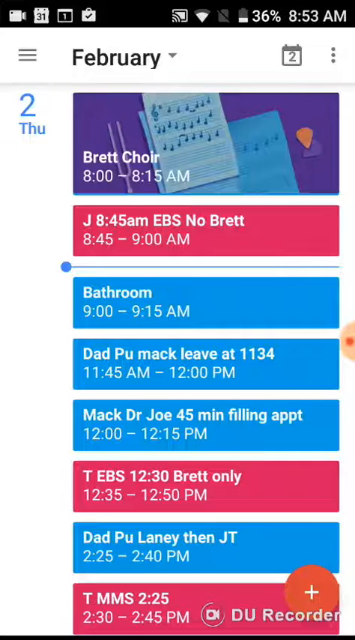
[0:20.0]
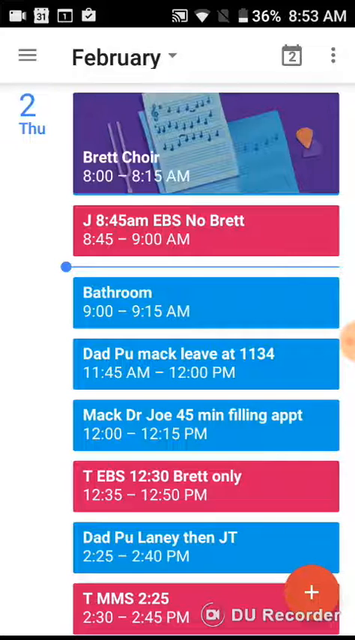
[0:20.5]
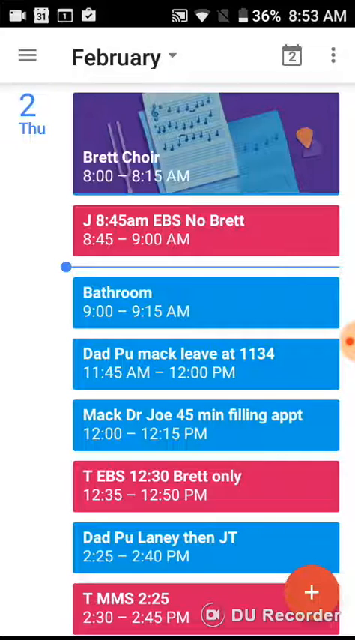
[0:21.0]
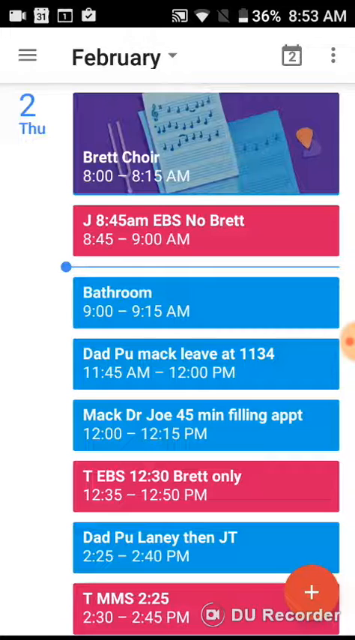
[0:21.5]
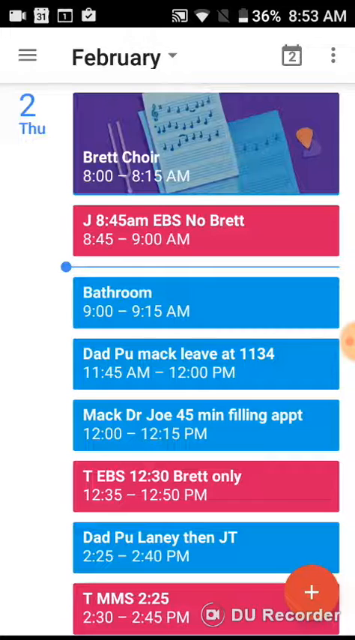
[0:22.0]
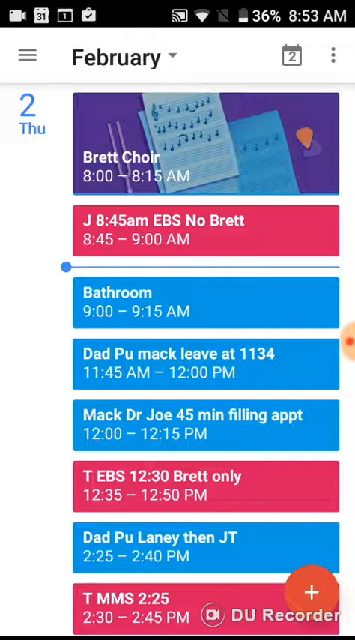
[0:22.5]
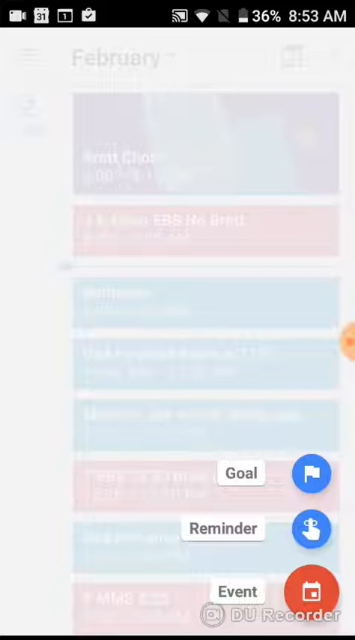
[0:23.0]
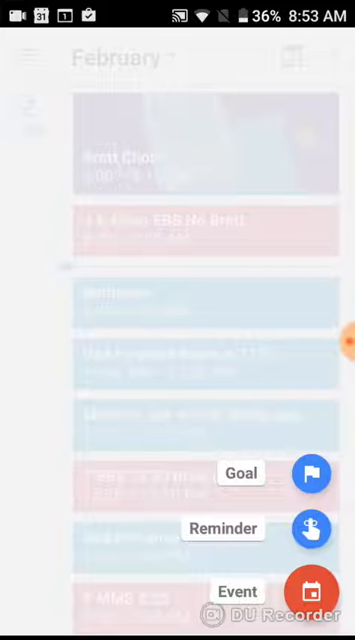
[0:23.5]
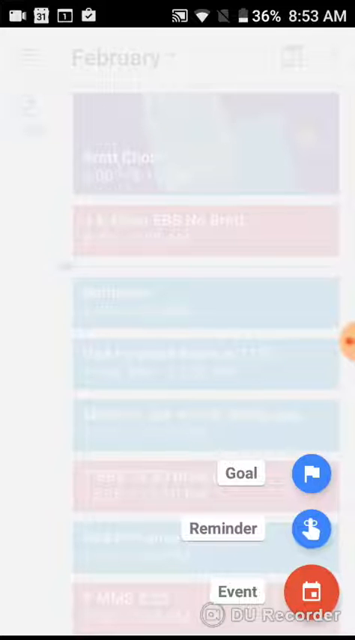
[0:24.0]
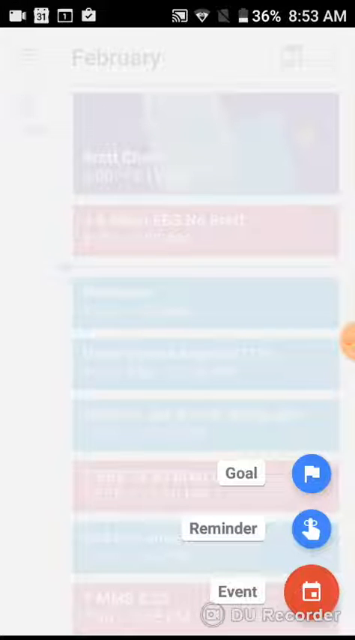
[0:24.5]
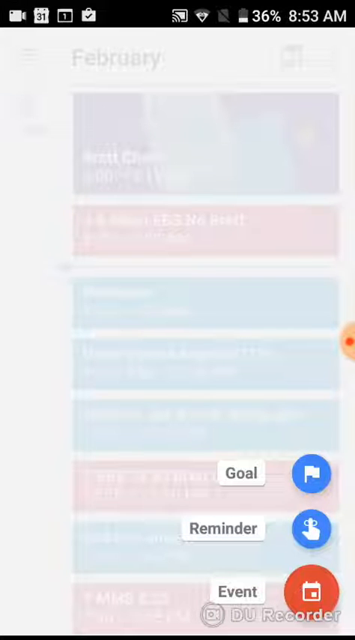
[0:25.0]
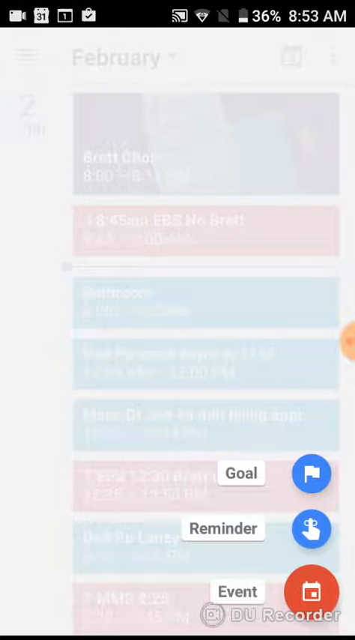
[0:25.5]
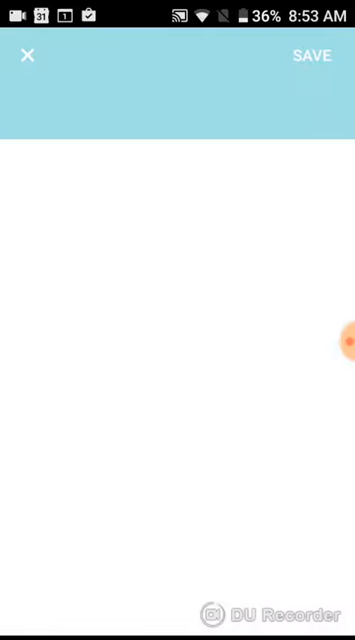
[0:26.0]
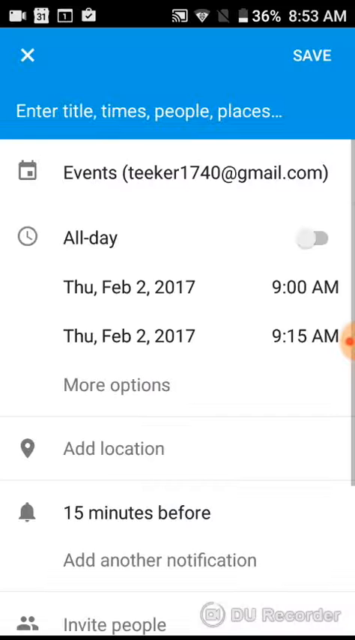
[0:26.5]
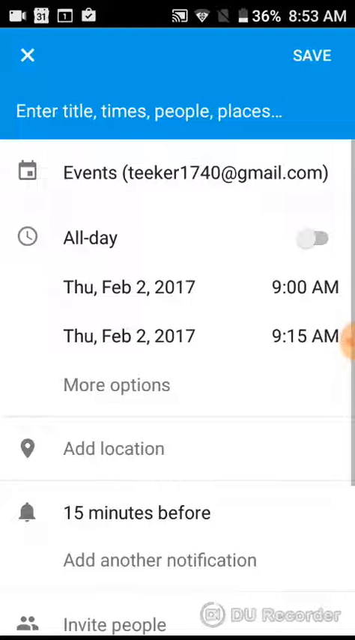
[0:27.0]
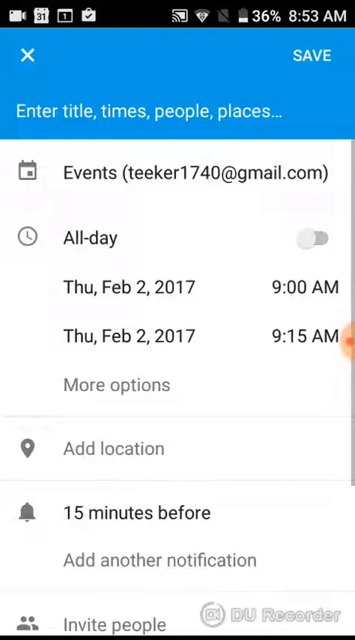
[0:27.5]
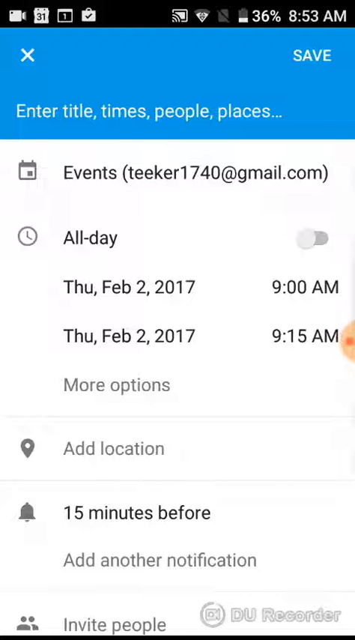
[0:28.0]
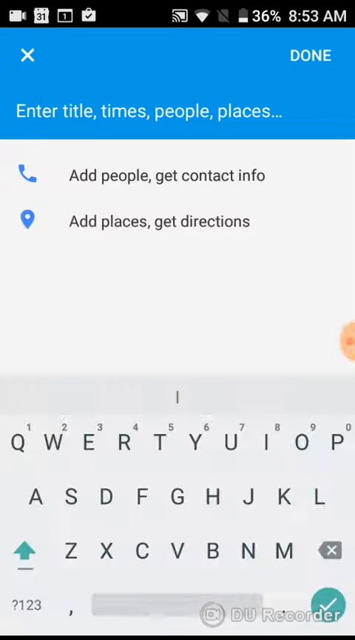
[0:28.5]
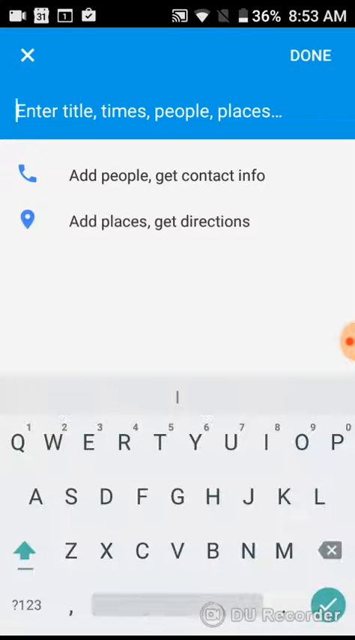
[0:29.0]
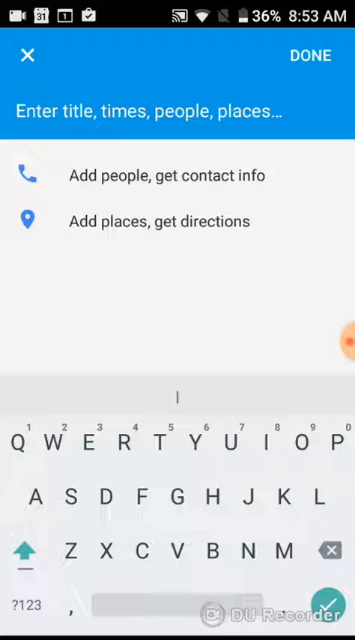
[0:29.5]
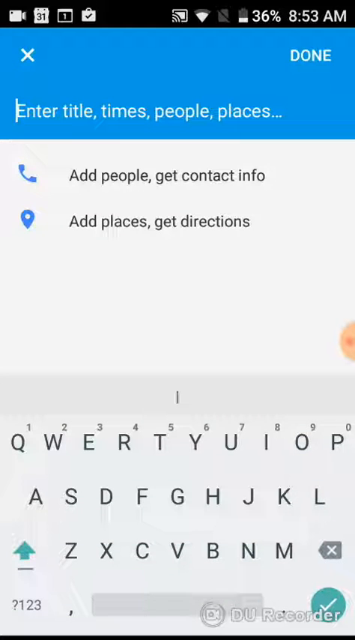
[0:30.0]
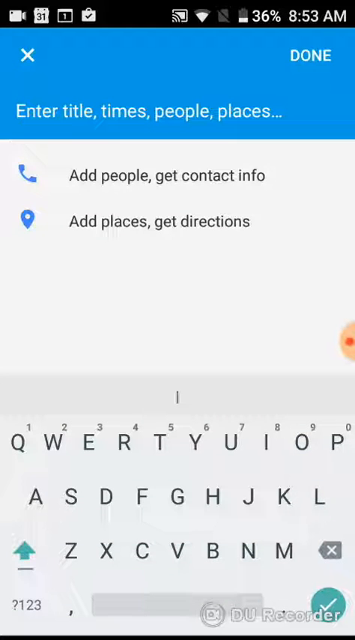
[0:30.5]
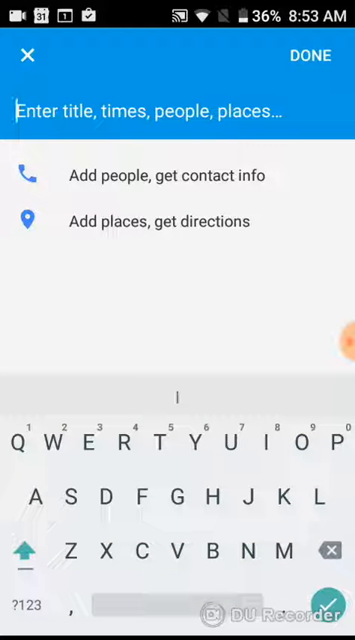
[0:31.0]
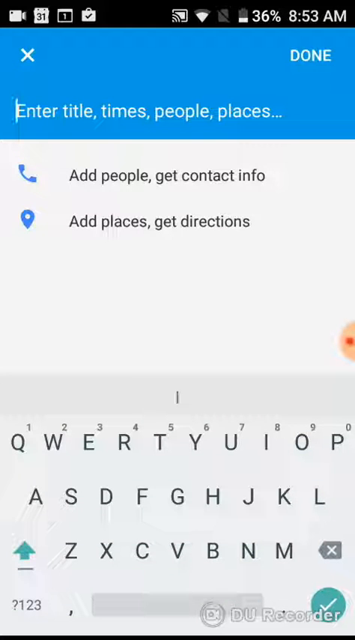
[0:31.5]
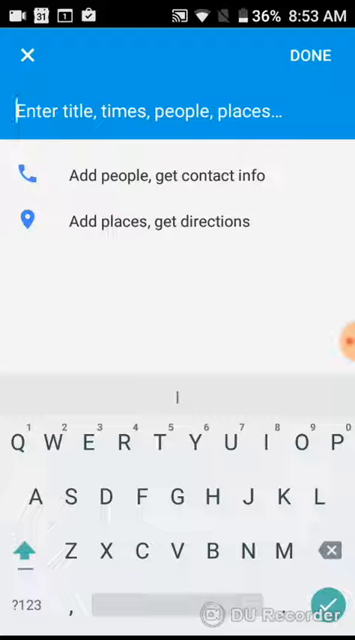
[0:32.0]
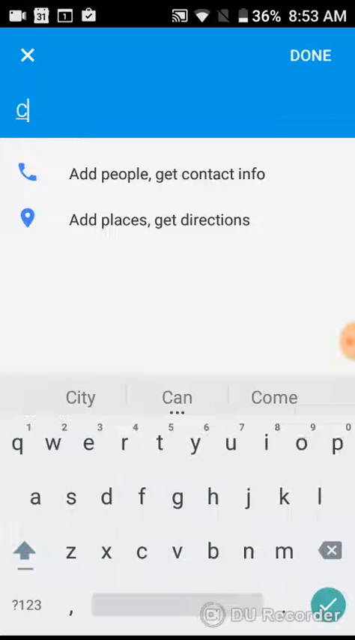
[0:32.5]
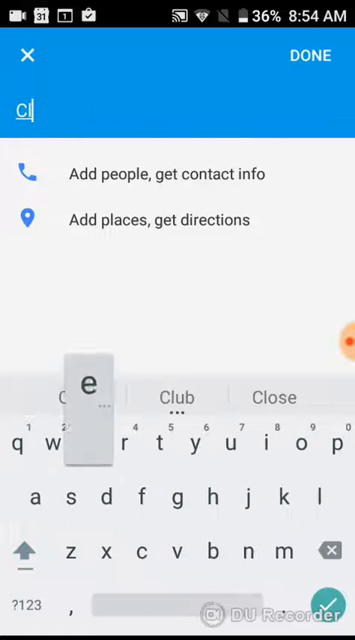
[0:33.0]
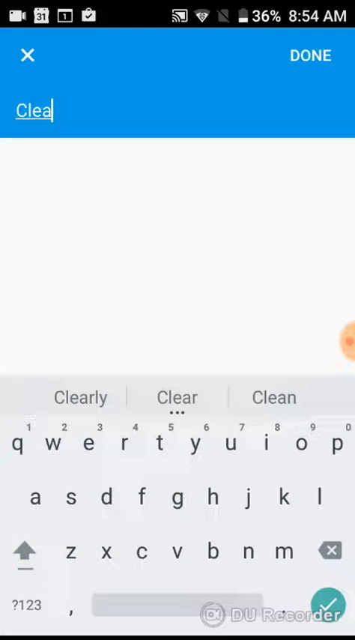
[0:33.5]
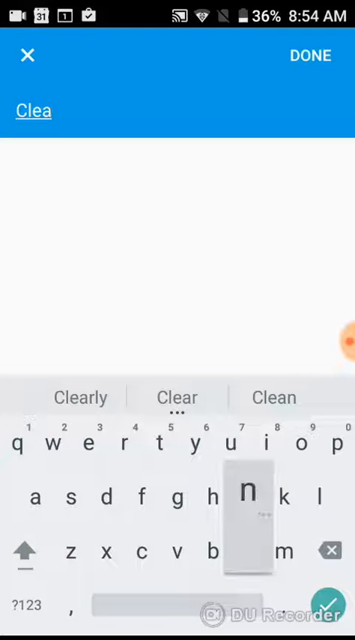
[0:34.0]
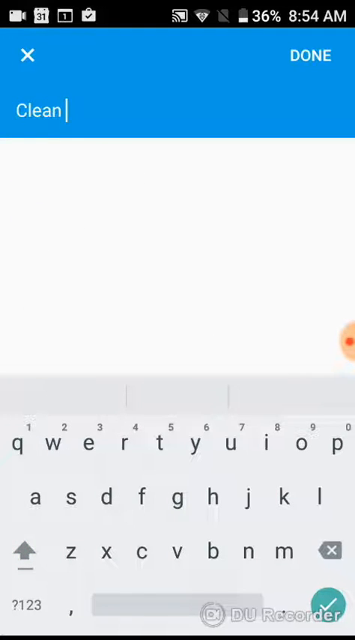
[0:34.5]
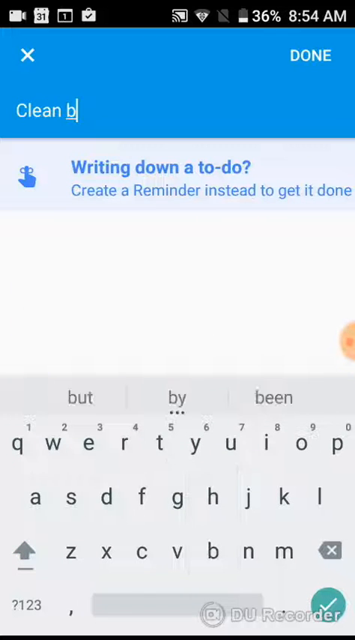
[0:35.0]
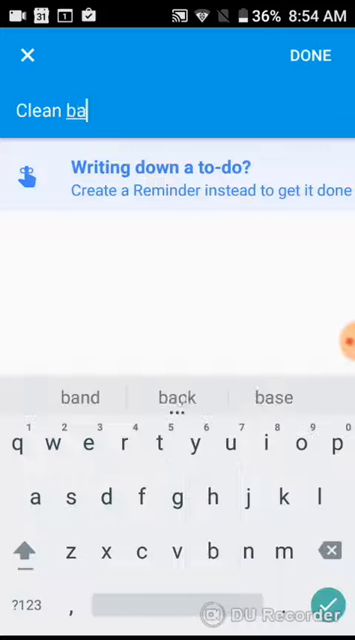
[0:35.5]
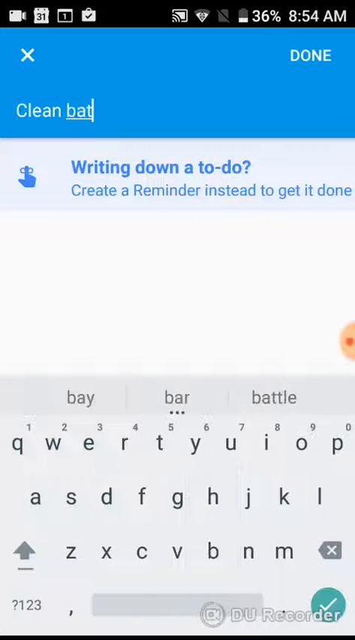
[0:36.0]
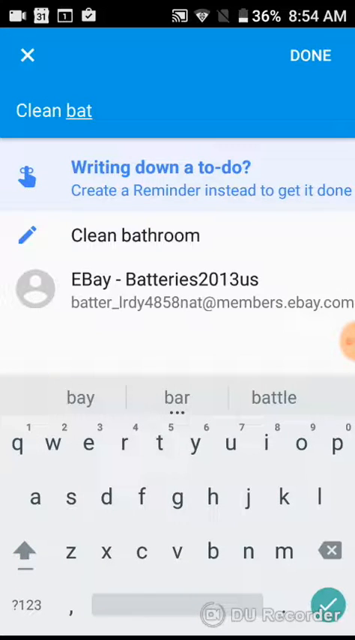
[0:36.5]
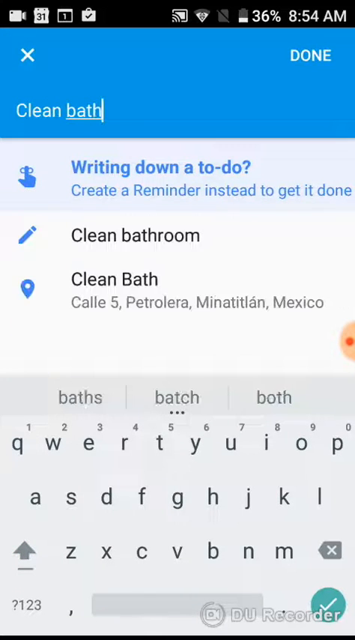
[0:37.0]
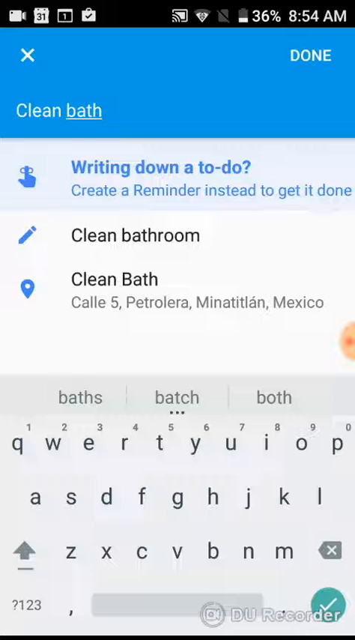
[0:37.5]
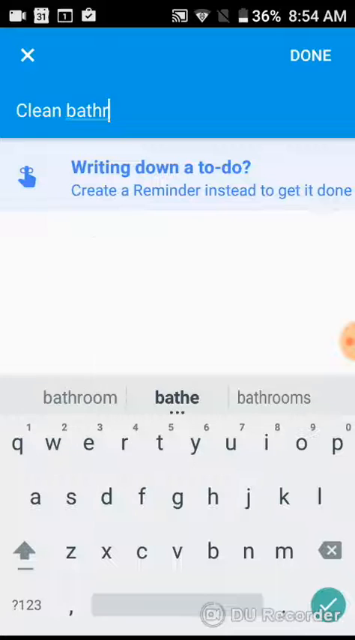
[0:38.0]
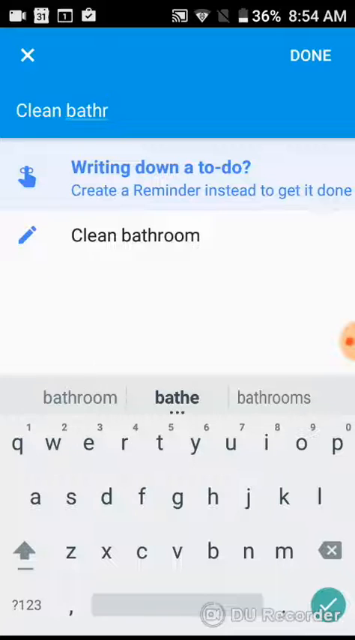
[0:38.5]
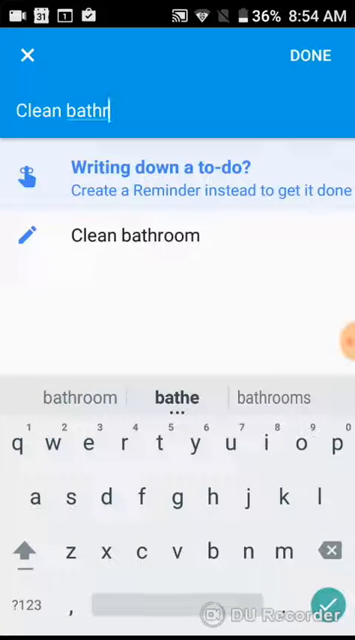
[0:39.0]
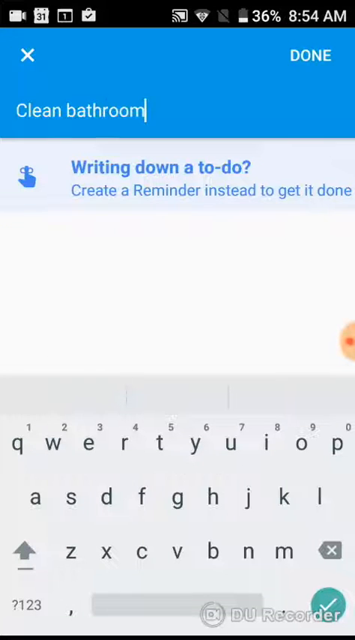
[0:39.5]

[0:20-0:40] Still in the Google Calendar app, the user presses the event button to add a new event and enters the event name "clean bathroom." There are three options to choose from: goal, reminder and event. The goal and reminder buttons are blue, and the event button is red. The account in use is tkir174@gmail.com. The event is set for Thursday, February 2nd, 2017, at 9am. The interface is light blue, and the phone is being recorded with an app.